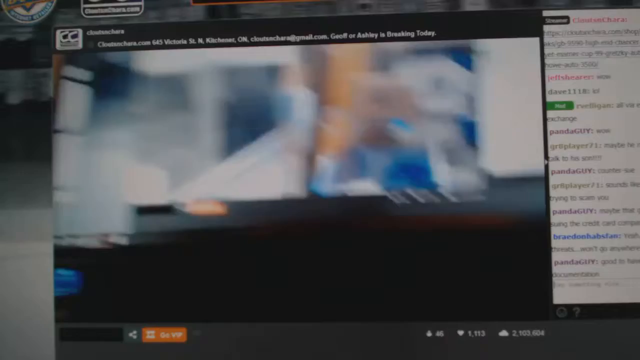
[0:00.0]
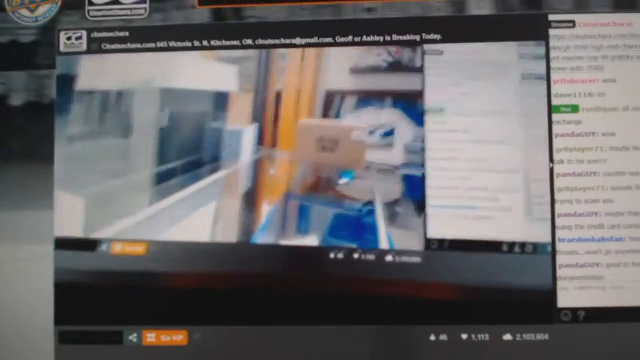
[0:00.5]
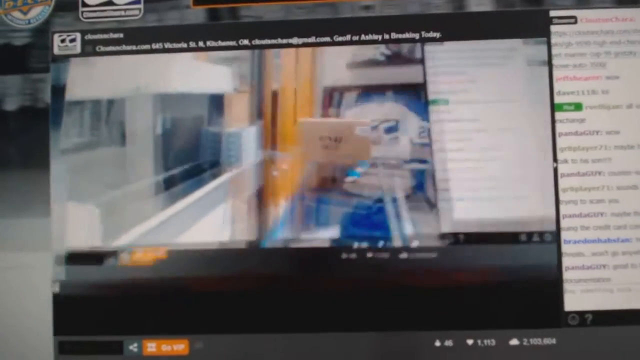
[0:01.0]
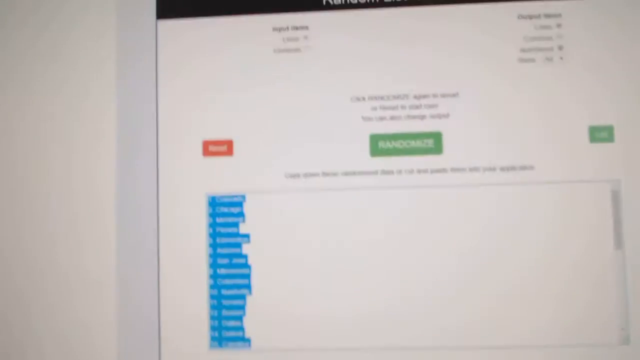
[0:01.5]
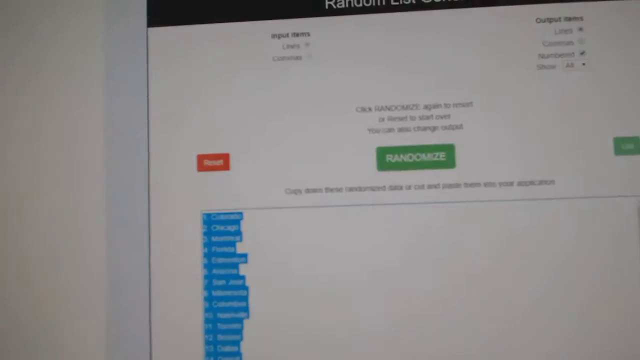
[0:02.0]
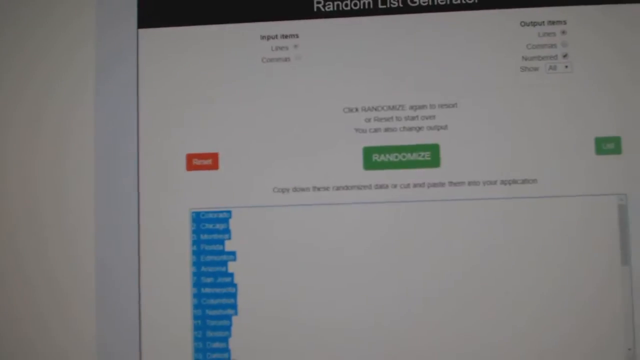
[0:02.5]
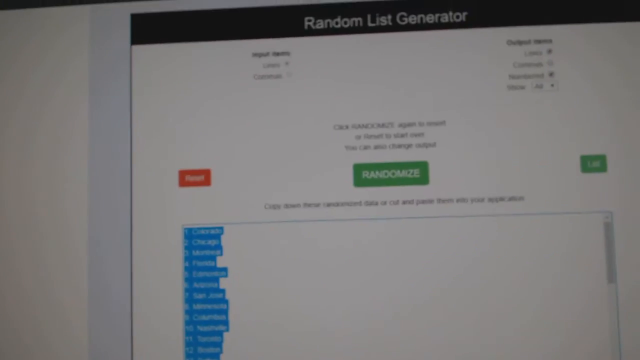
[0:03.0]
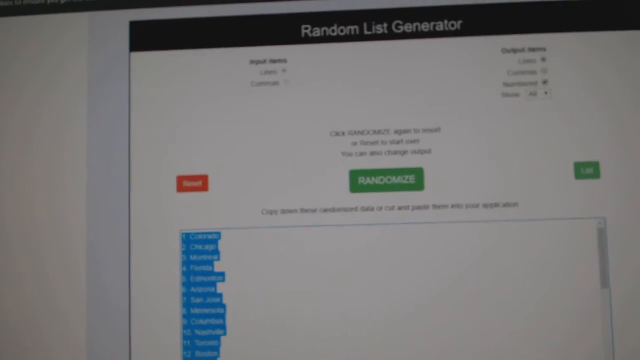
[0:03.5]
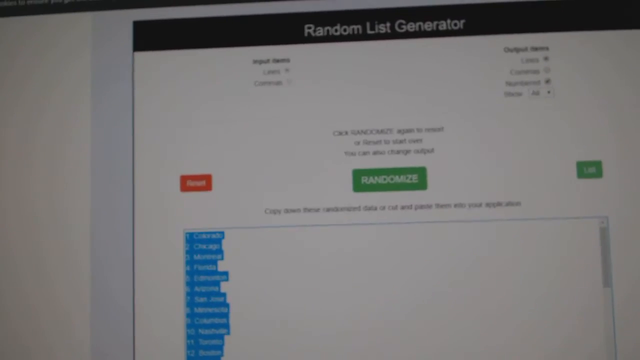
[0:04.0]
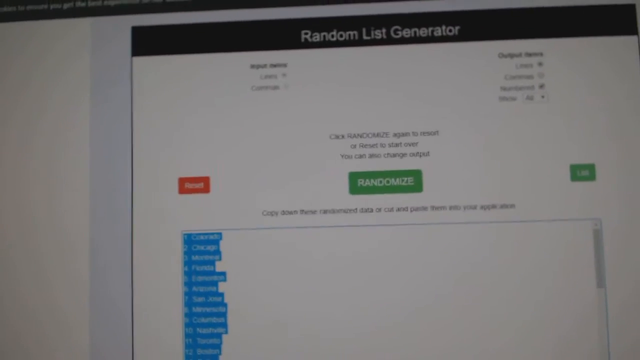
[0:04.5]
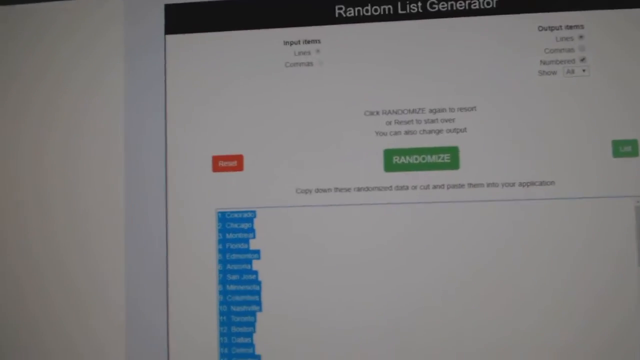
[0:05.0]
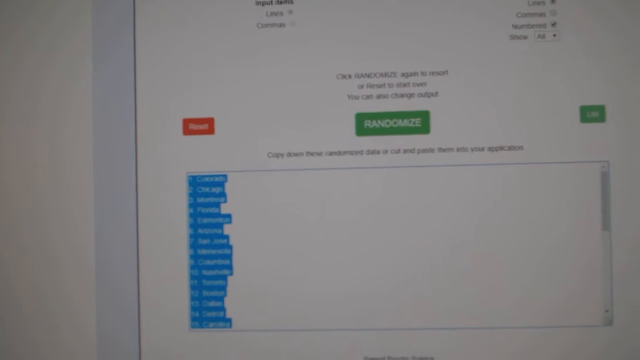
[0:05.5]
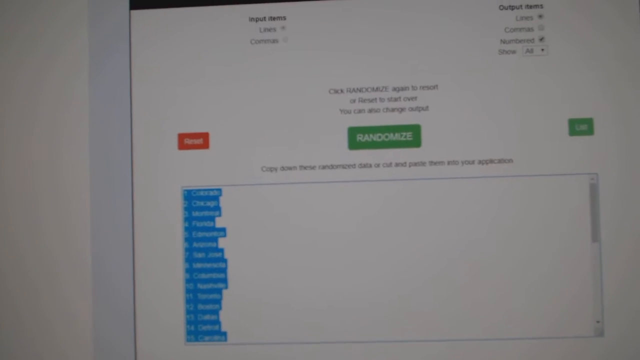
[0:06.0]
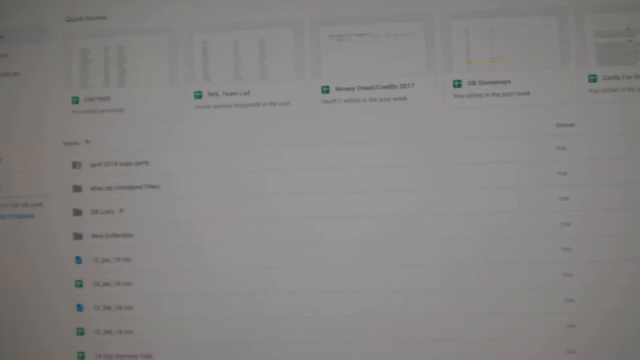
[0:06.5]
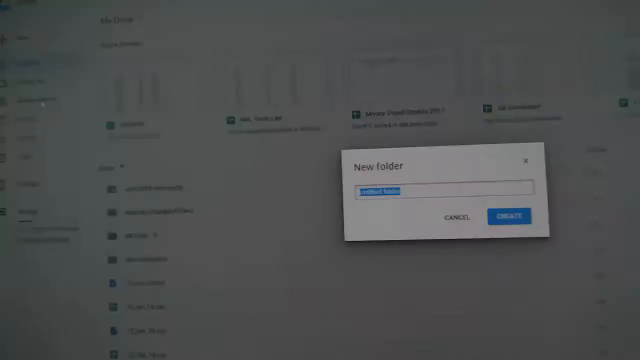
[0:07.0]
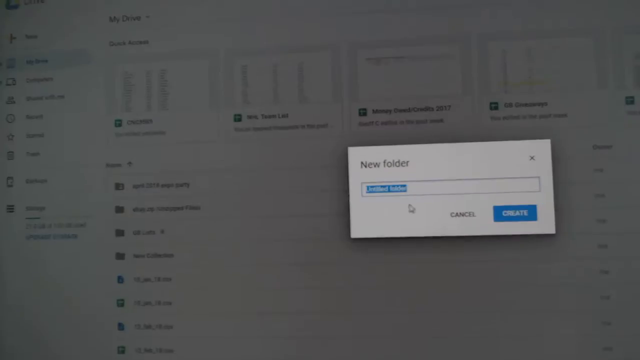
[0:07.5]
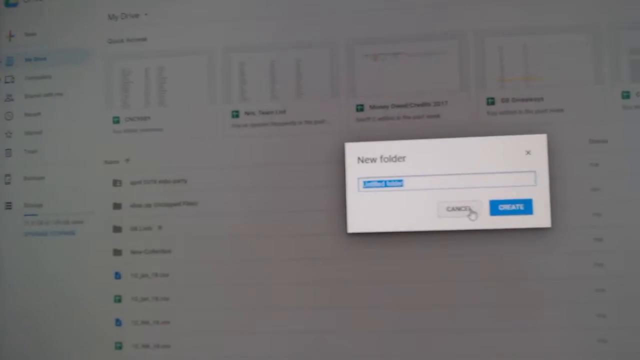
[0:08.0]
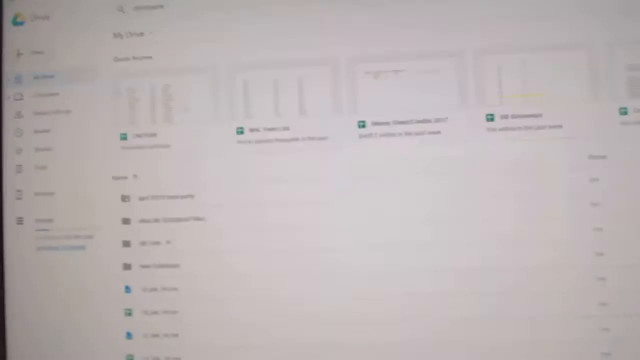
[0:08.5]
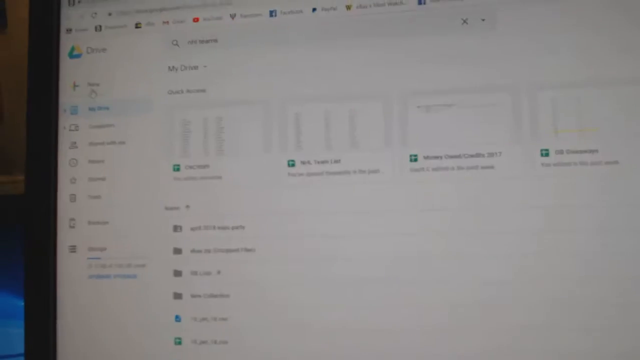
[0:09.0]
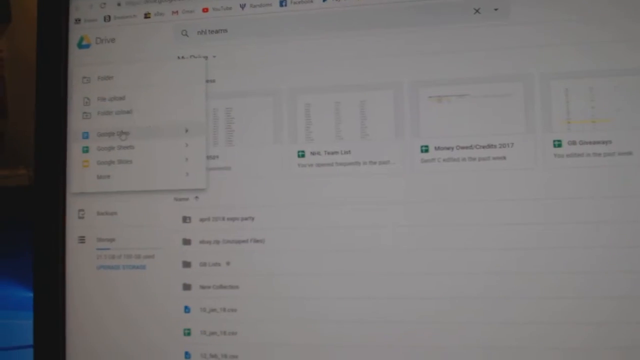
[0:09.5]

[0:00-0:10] What appears to be a screen recording shows somebody recording a video. It shows a random list generator, and a new folder is being created on a Google Drive and saved. There are some comments on it. The content is possibly something to do with packaging, maybe a post office type of thing.